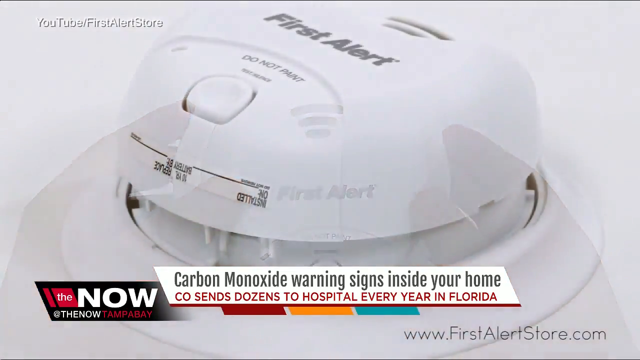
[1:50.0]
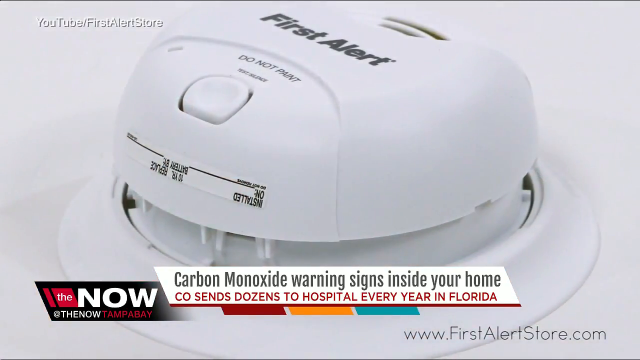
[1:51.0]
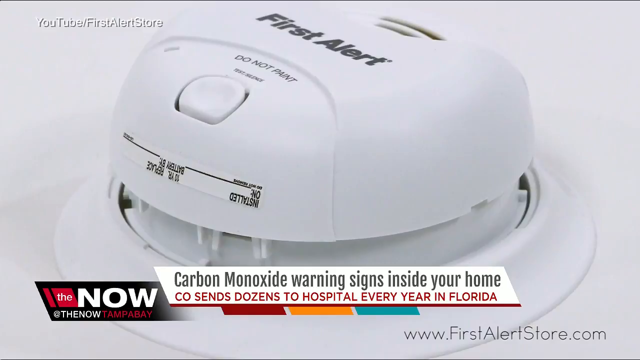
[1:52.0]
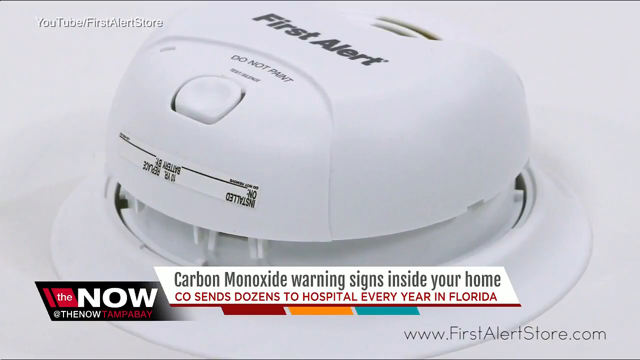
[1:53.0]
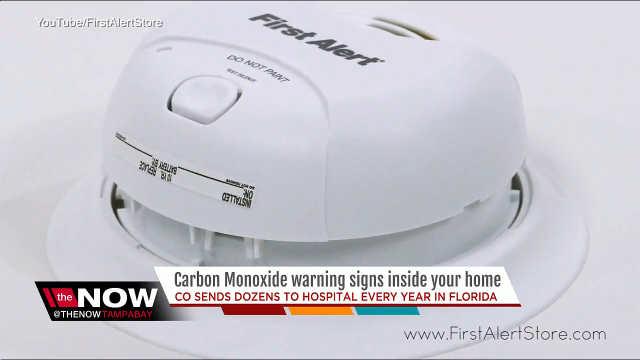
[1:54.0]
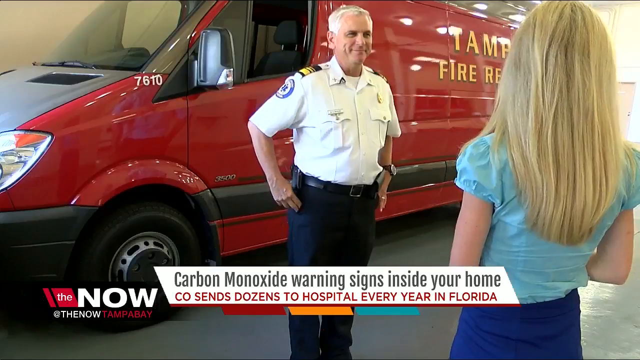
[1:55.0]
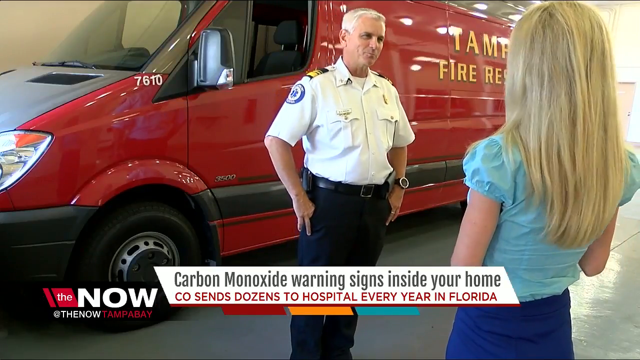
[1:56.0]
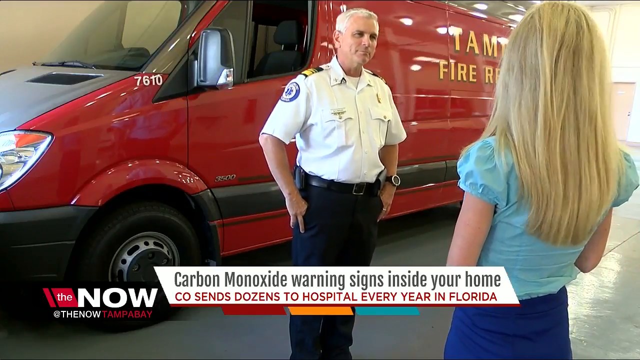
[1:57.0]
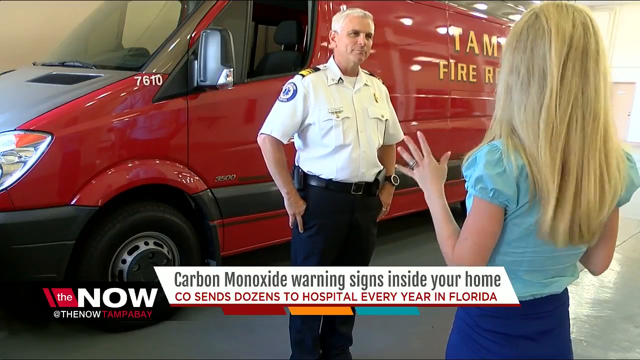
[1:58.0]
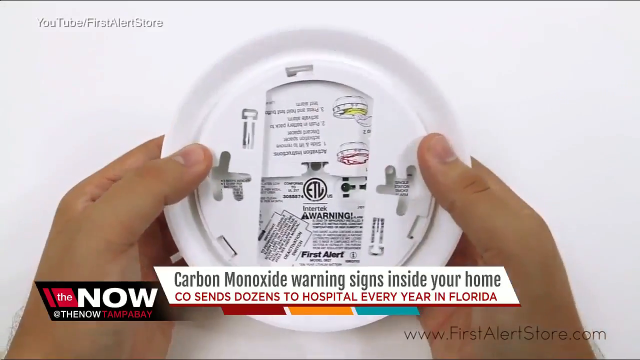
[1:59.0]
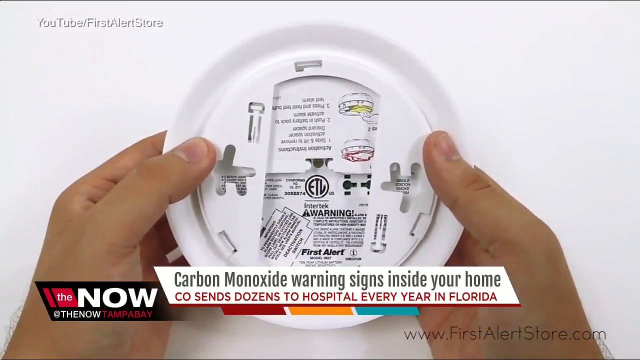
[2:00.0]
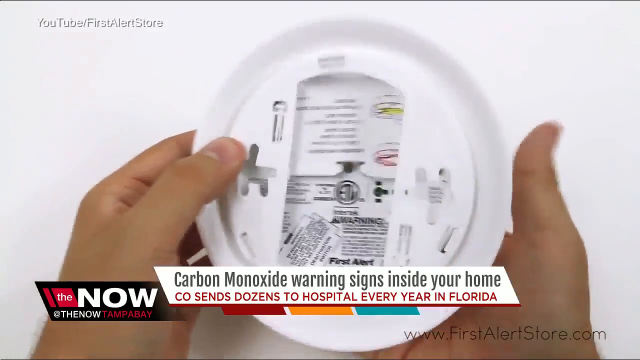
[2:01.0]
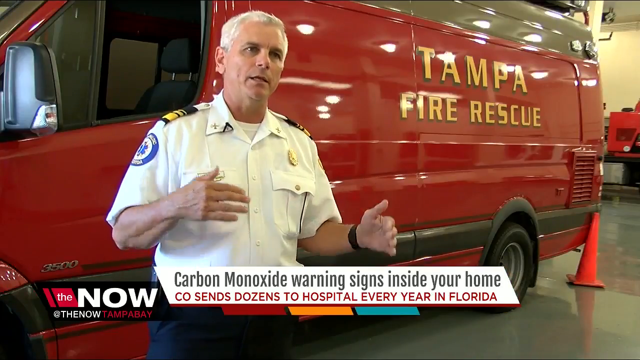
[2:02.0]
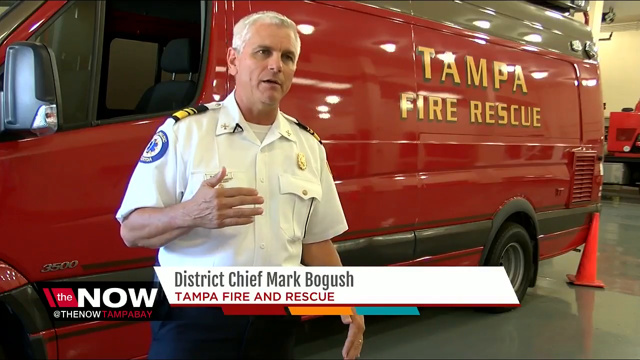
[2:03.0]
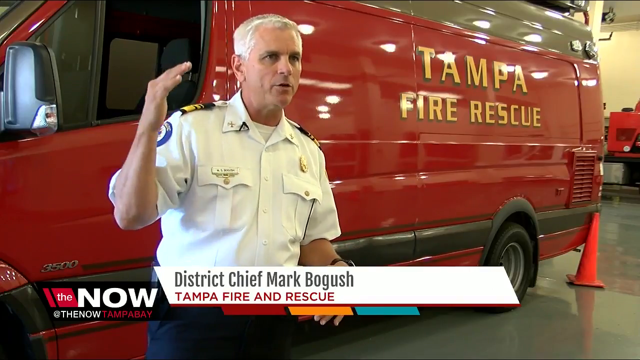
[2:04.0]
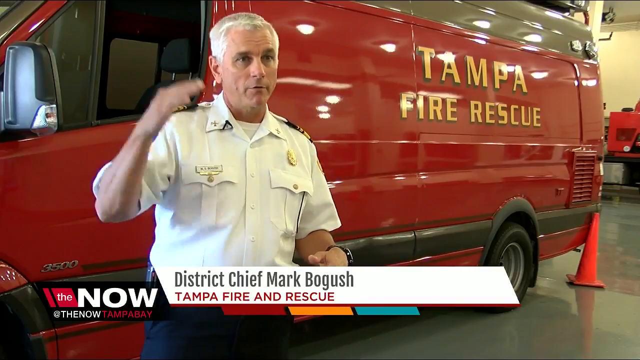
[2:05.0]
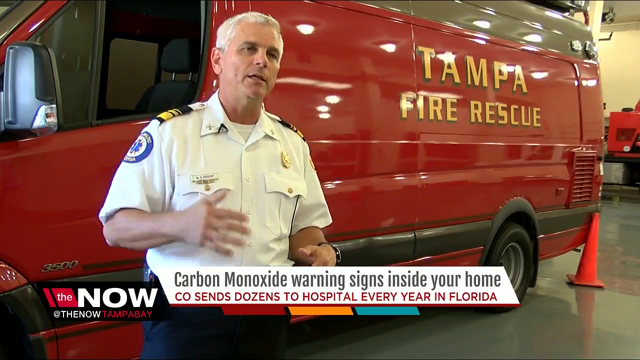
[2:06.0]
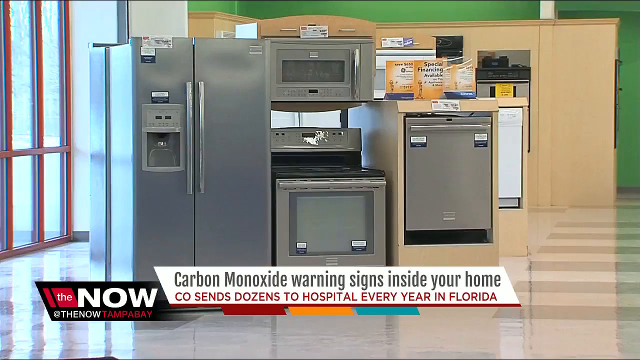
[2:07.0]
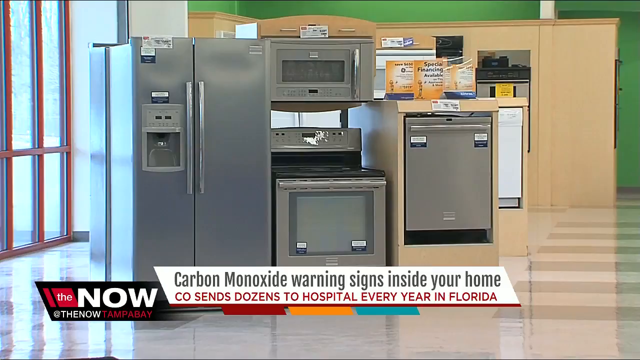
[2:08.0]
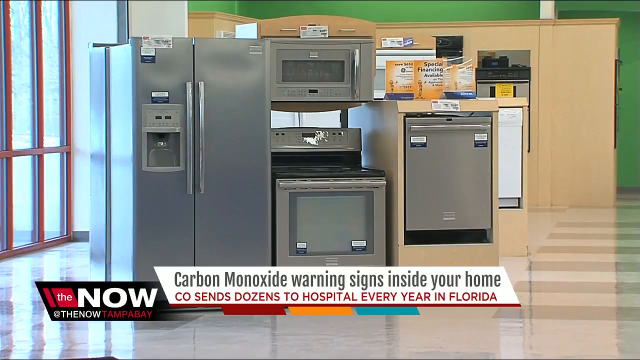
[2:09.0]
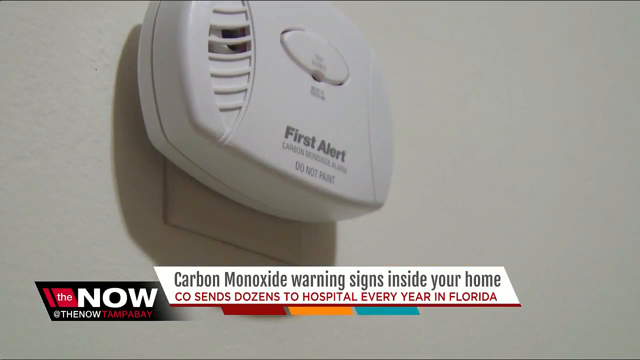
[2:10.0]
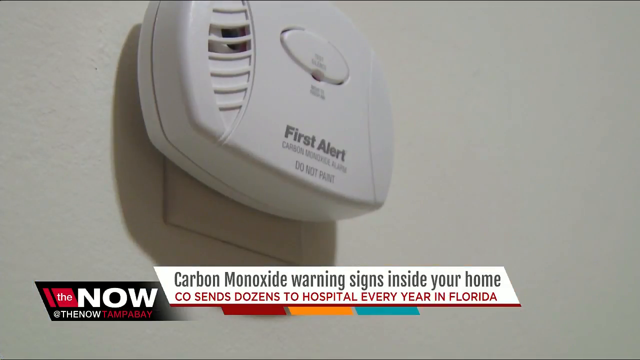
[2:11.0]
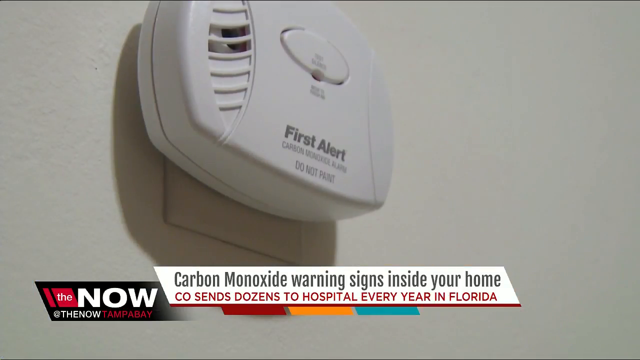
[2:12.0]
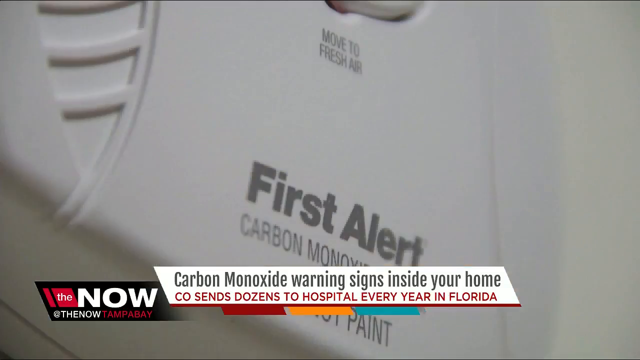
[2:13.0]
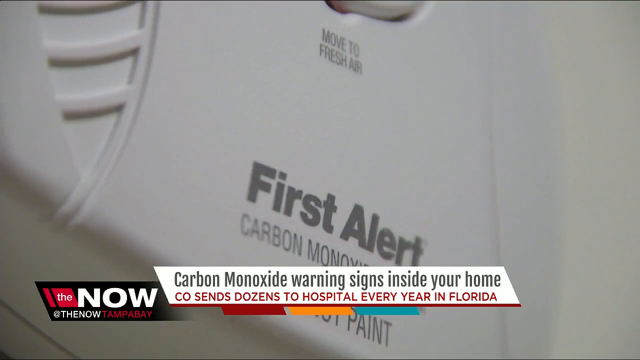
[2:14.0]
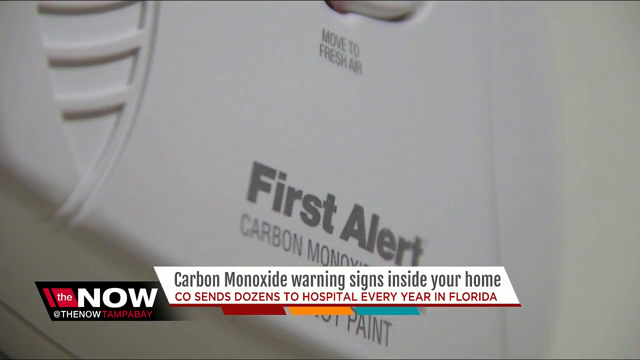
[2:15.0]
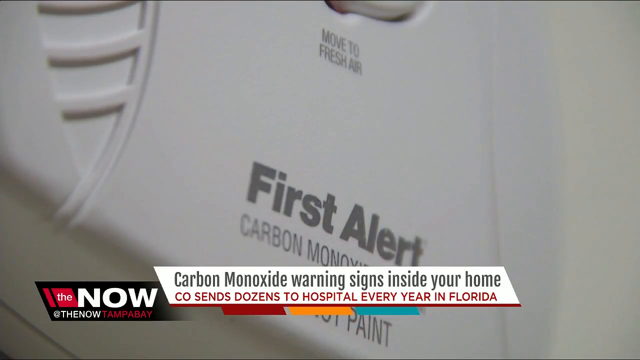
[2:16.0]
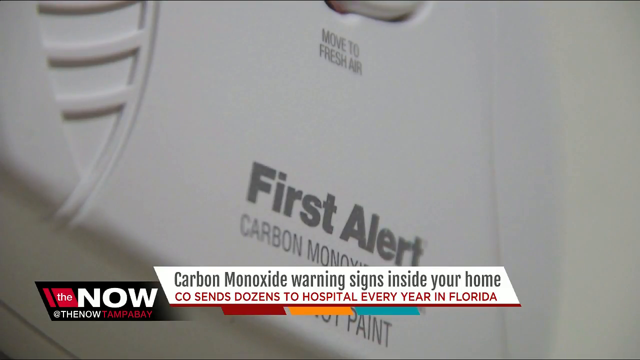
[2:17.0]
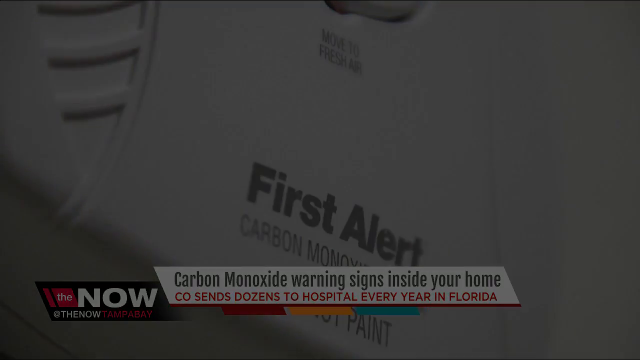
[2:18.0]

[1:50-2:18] A round First Alert device, circular at the top, is shown. Black lettering on top reads "first alert", with "do not paint" underneath, then "test / silence" and a white button. Below that is what looks like a sticker with black lettering reading "installed on" and "do not remove" above a black line, and beside it "10 ER", "battery", "replace battery by" and another line. White lettering at the top left reads "YouTube / first alert store", and black lettering at the bottom right reads "www.firstalertstore.com". The white banner in the middle reads in black lettering "carbon monoxide warning signs inside your home", with red lettering underneath reading "CO sends dozens to hospital every year in Florida". On the left is the black banner with a reddish box holding the white word "the", "now" in white letters on black beside it, "at the now" in white underneath, and "Tampa Bay" in red beside that. The next image shows a red and black lined truck with the yellow lettering "Tampa Bay fire". The blonde-haired woman in a light blue top and blue pants is on the right side, and a white man with whitish hair is on the left, in a white short-sleeved collared shirt, blue pants and a black belt, with two fingers in his pocket as he listens to her talk. The back of the carbon monoxide device is shown, with attachments for hooking it to a ceiling or wall and some small black lettering in the middle. The image shifts back to one of the fire chiefs. The lettering on the reddish van behind him reads in yellow "Tampa fire rescue", and an orange cone is leaning against the very back end of the van. The white banner beneath him reads in black letters "district chief Mark Bogush", with red lettering underneath reading "Tampa fire and rescue". A yellow wall can be made out on the right side. The next image shows gray appliances: on the left a gray double-door refrigerator with silver pole handles, a gray and black top stove with a gray-faced, silver-handled microwave just above it, and to the right a gray-fronted, silver-handled dishwasher. The flooring looks to be a light beige colour. There is a green wall at the back and a beige wooden wall, and the window on the left side has red strips for each window pane. Then the round First Alert carbon monoxide filter is shown, with black lettering at the bottom reading "first alert", smaller text underneath reading "carbon monoxide alarm", and "do not paint" below that. It is leaning against the beige wall, and the lettering just above it reads "move to fresh air".